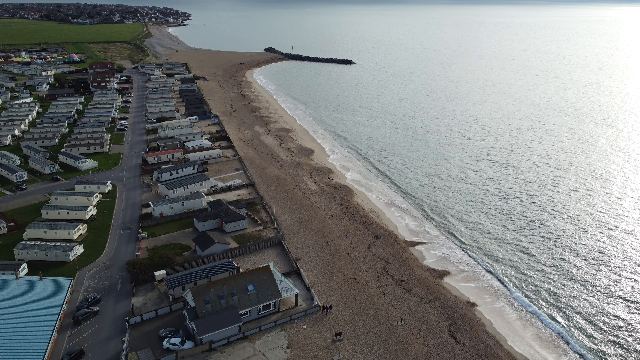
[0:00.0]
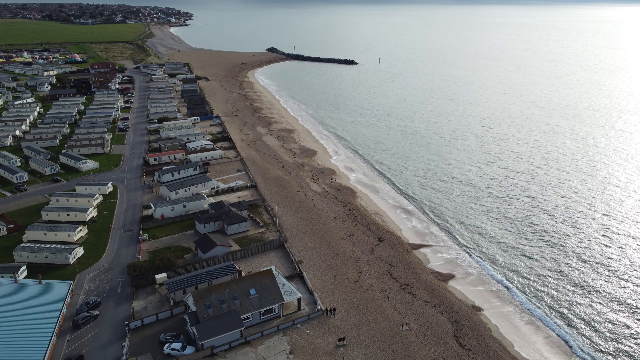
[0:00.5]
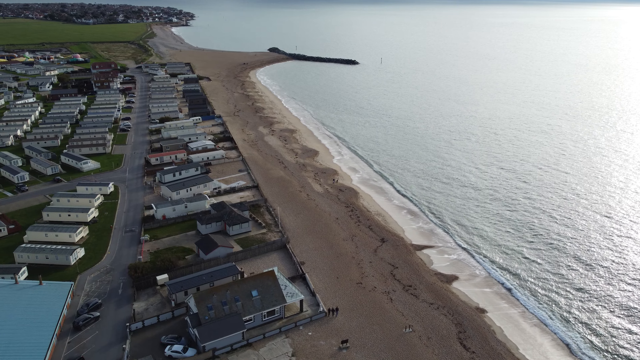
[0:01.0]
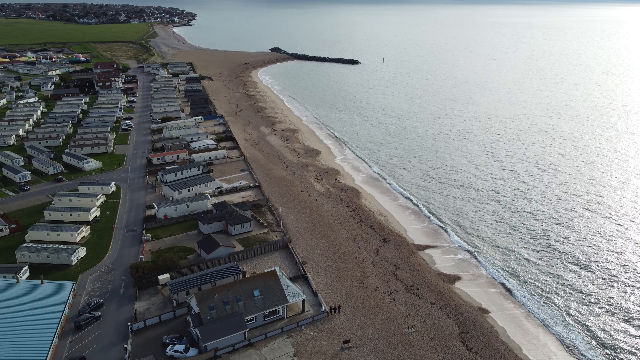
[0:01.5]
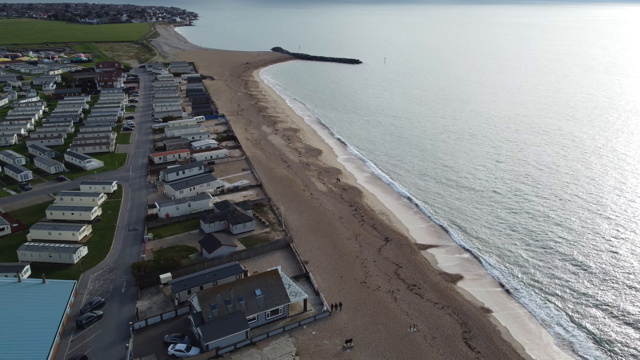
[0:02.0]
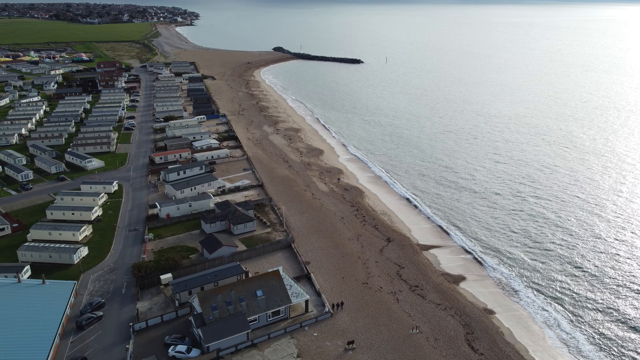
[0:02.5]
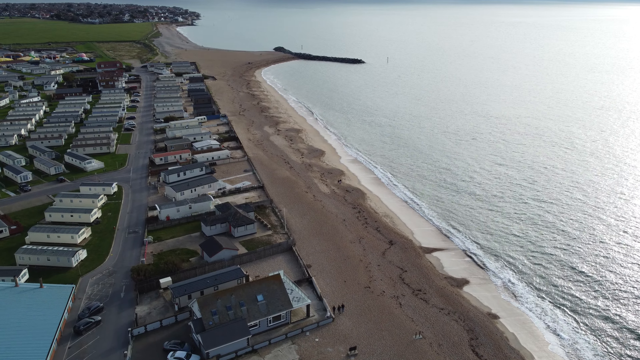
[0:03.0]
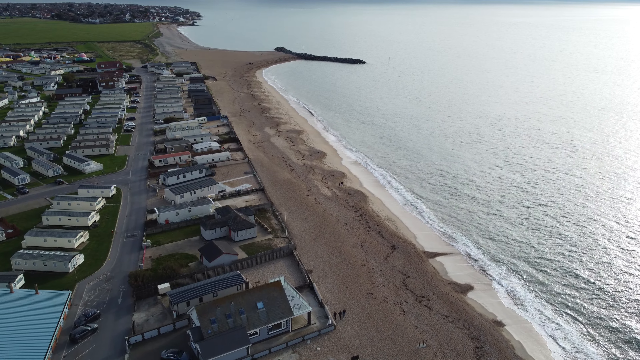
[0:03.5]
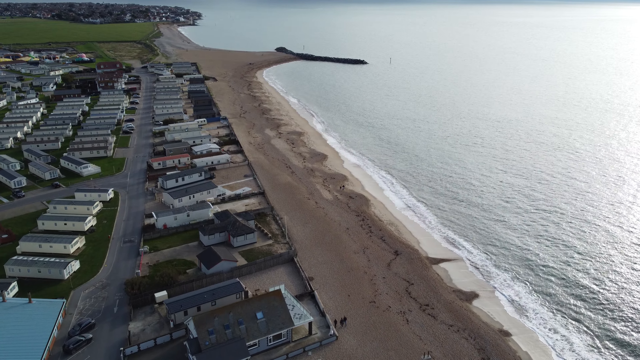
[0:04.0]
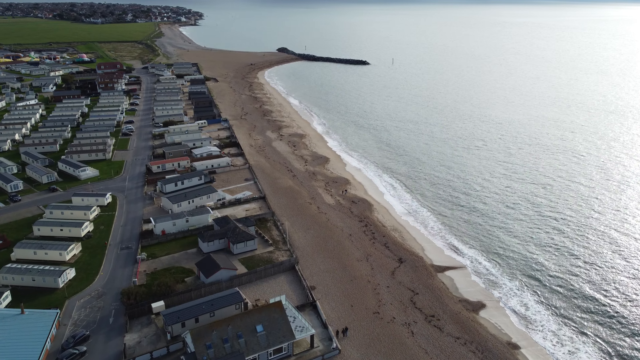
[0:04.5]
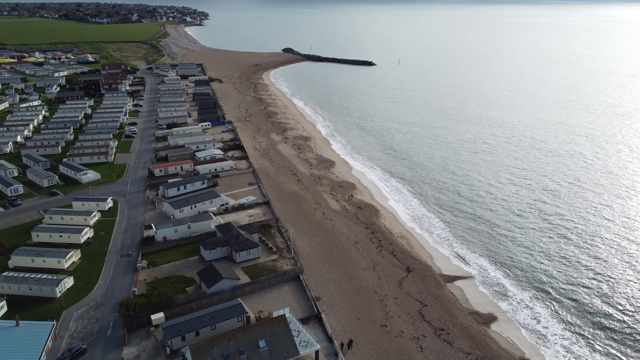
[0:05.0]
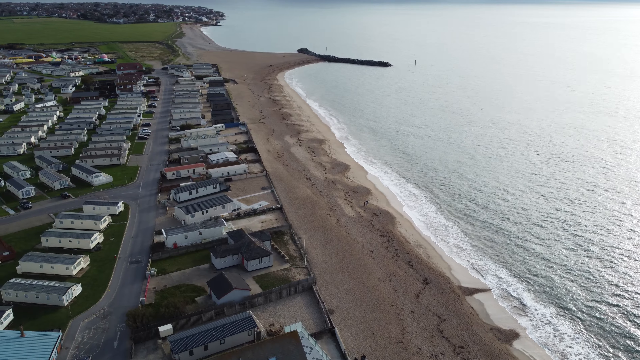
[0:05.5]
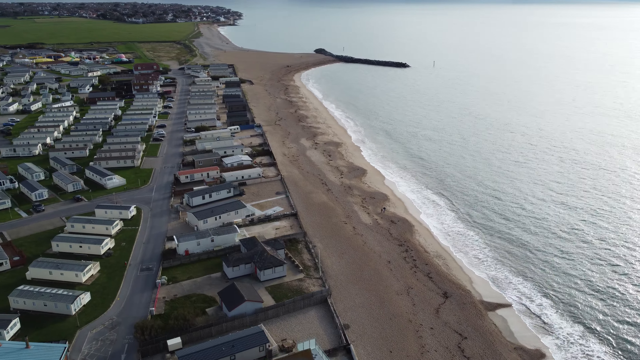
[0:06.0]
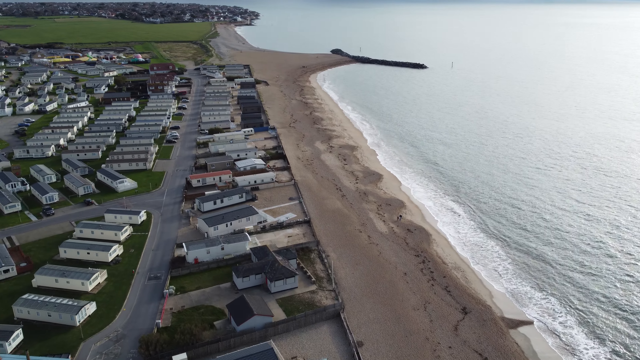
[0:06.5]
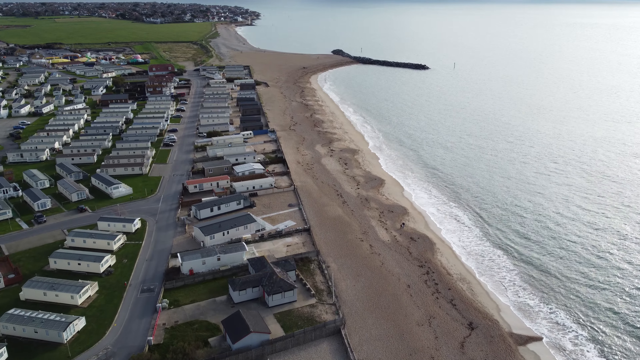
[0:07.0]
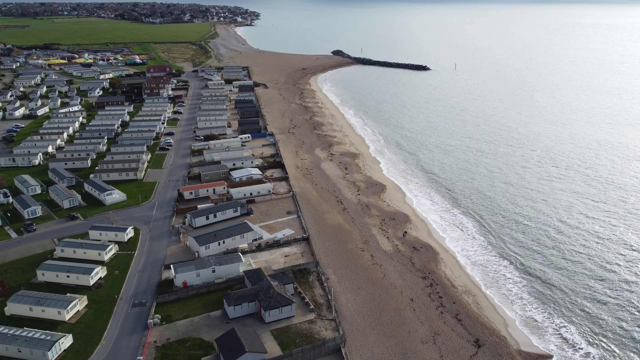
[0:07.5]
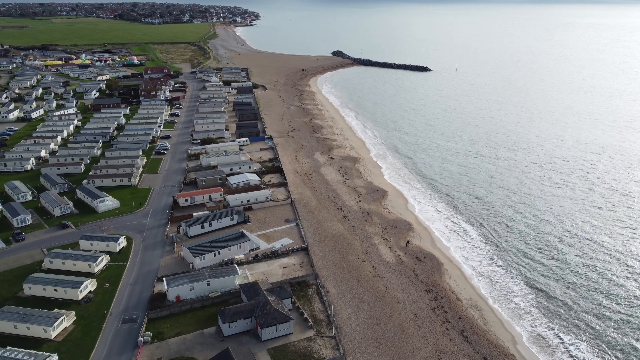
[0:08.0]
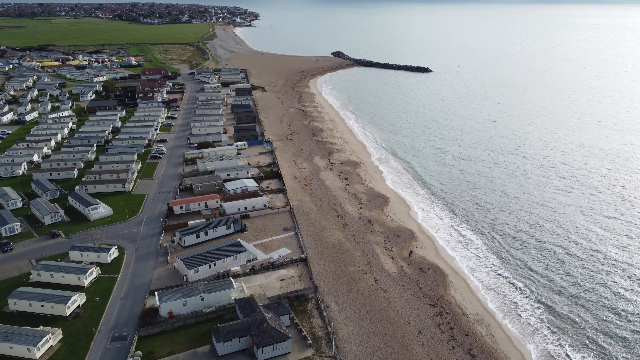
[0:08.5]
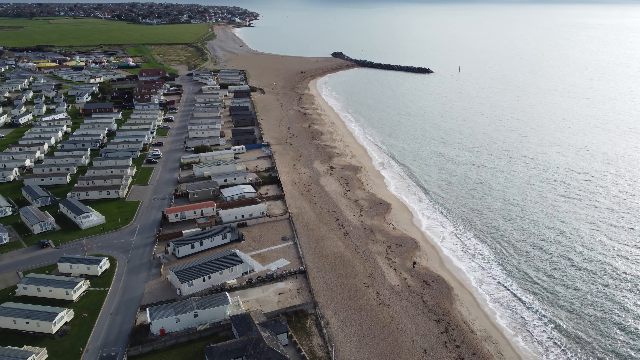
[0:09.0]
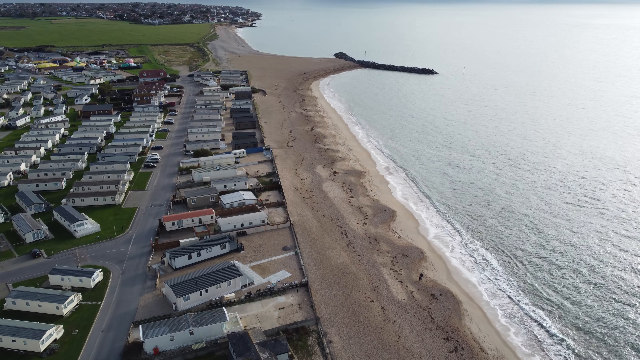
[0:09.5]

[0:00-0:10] What appears to be drone-type footage, taken from high above, shows a coastal scene. A sandy beach stretches along the coastline, with the sea lapping up onto the beach. Large structures that could be houses are visible, though judging by their type they could be holiday park accommodation. The scene looks like a typical UK beach town where people may go on holiday. The drone follows the beach down, and greenery comes into view.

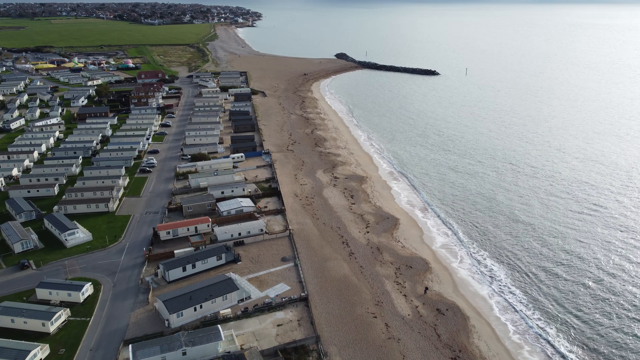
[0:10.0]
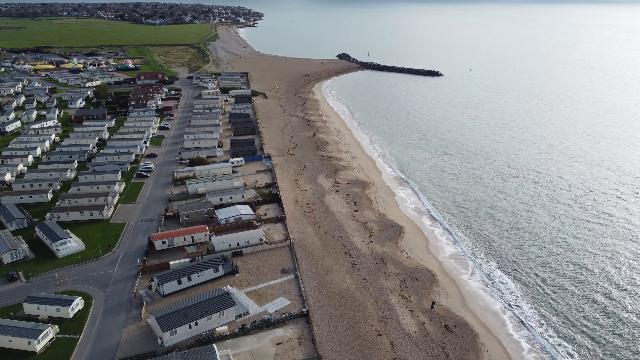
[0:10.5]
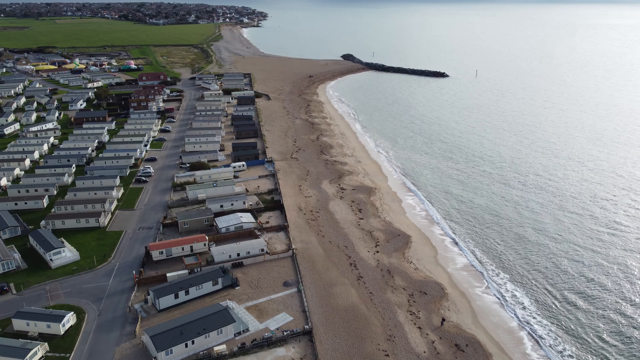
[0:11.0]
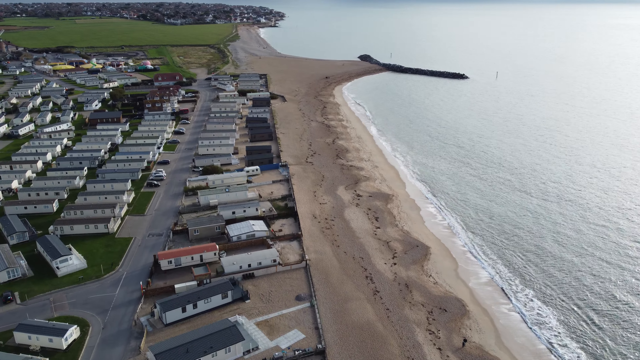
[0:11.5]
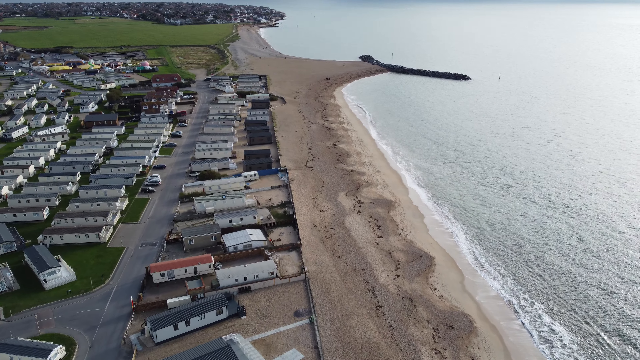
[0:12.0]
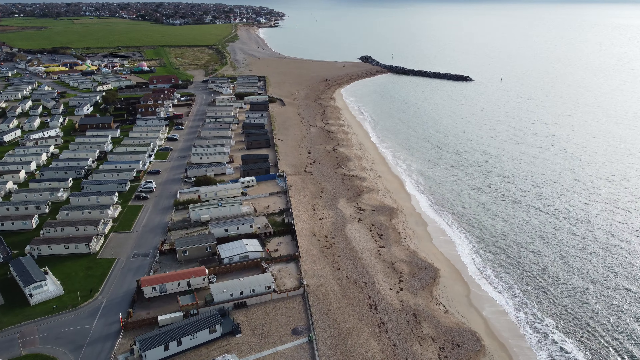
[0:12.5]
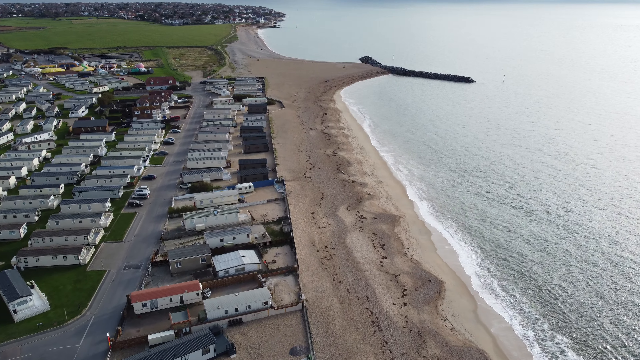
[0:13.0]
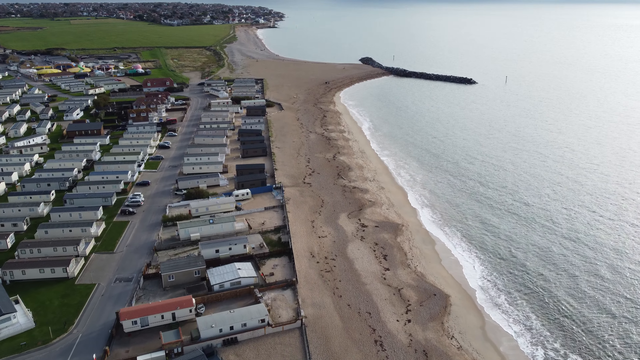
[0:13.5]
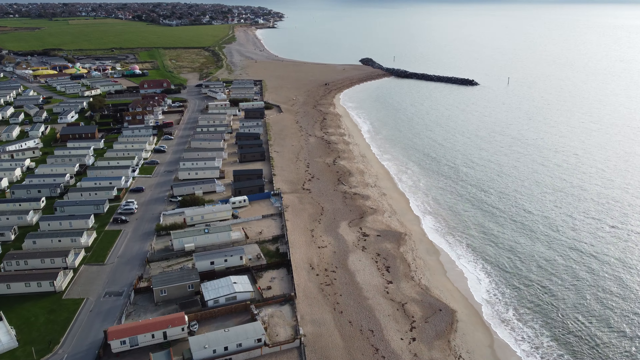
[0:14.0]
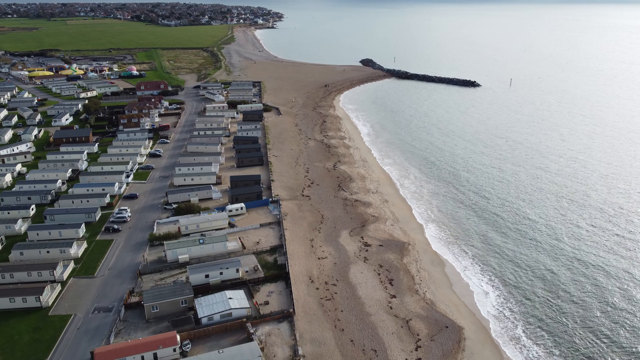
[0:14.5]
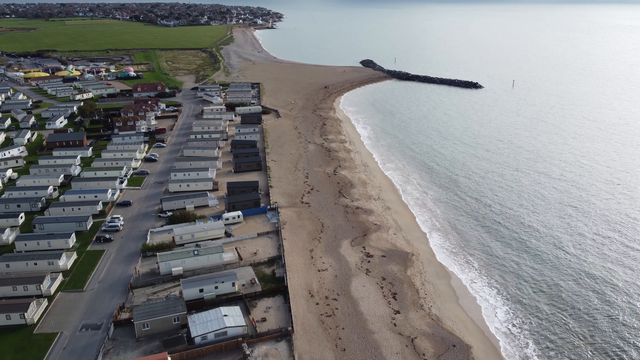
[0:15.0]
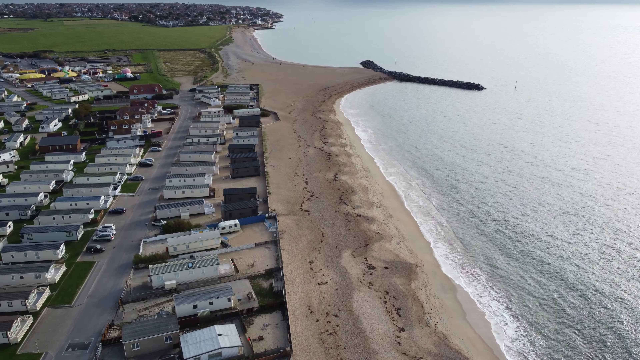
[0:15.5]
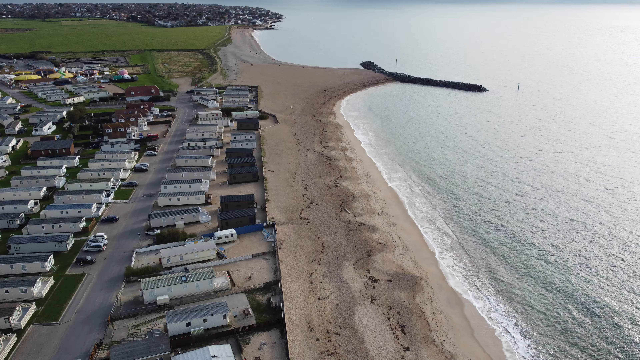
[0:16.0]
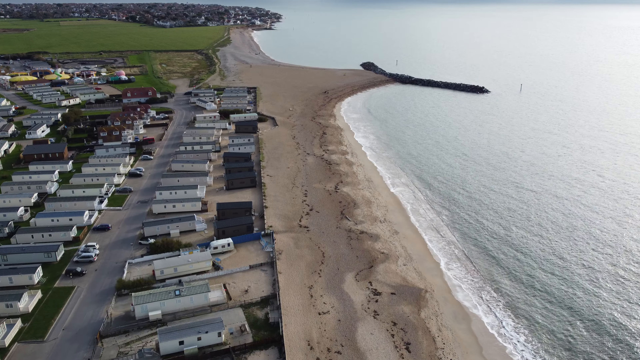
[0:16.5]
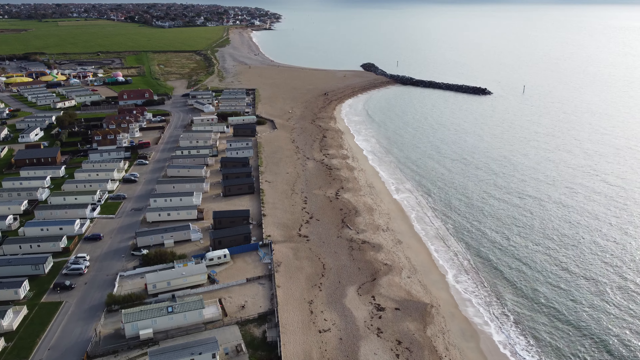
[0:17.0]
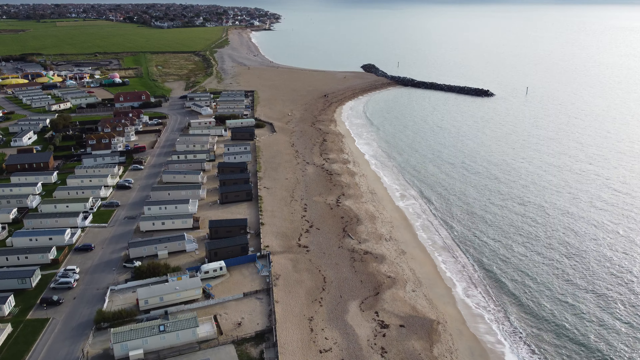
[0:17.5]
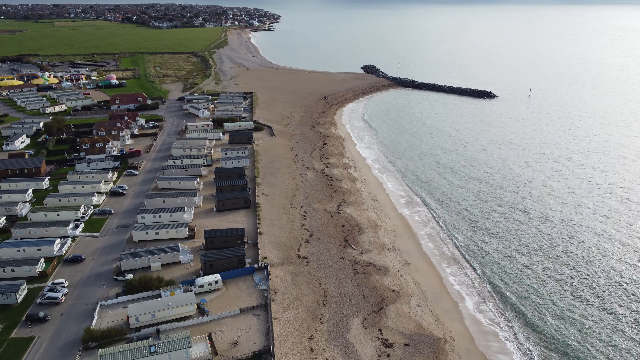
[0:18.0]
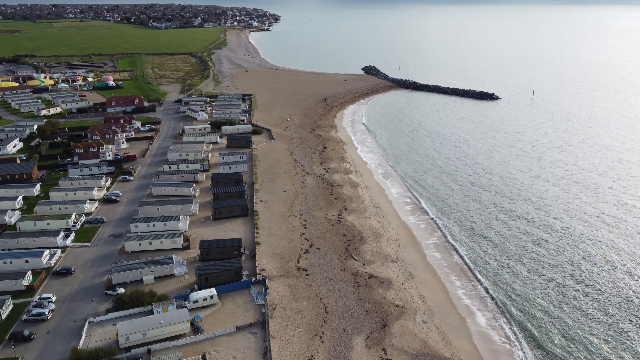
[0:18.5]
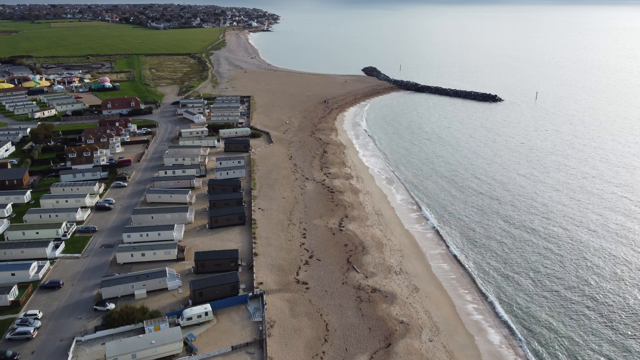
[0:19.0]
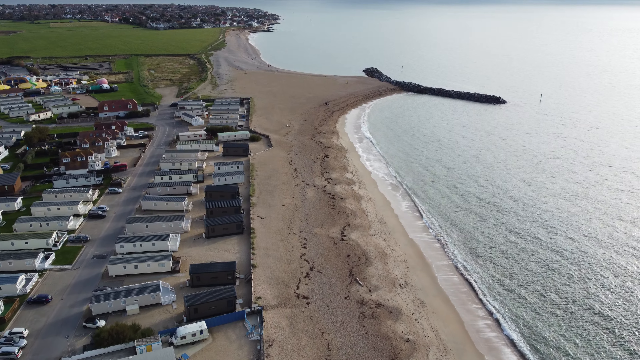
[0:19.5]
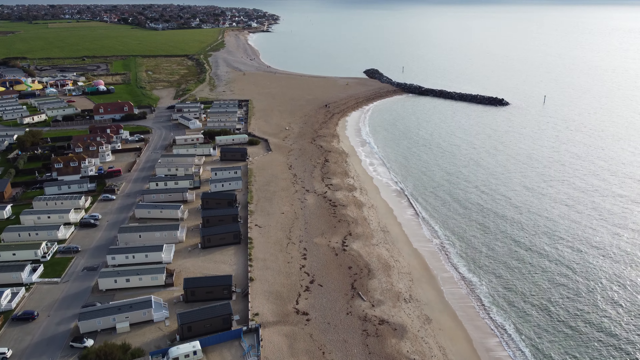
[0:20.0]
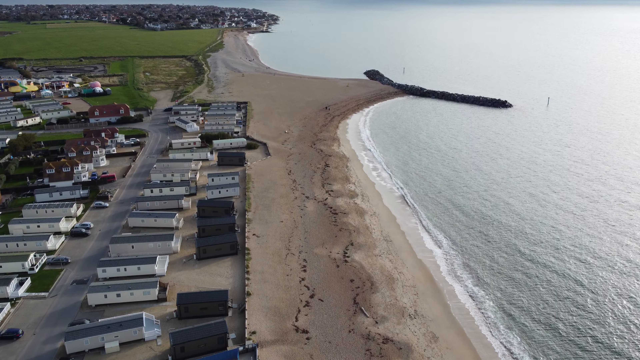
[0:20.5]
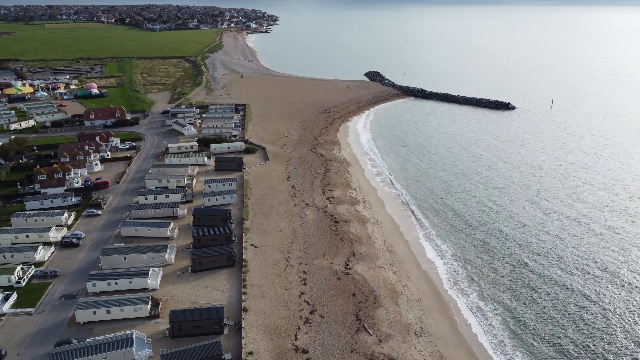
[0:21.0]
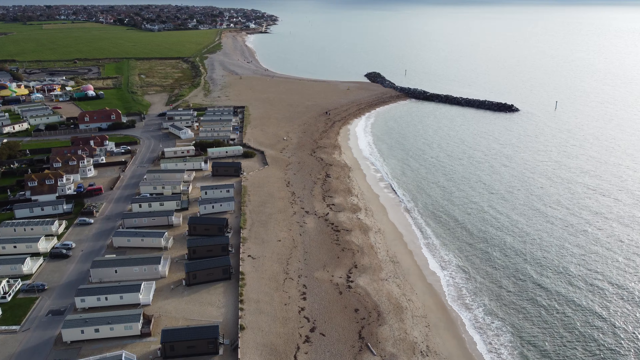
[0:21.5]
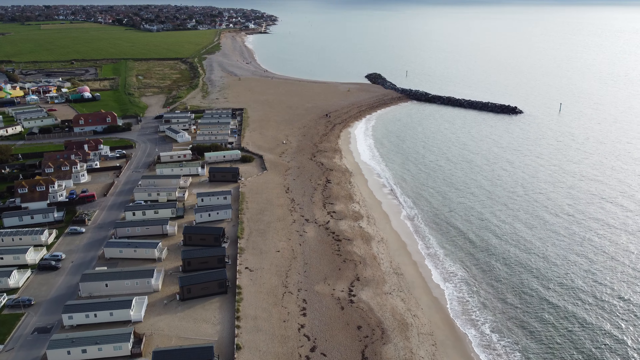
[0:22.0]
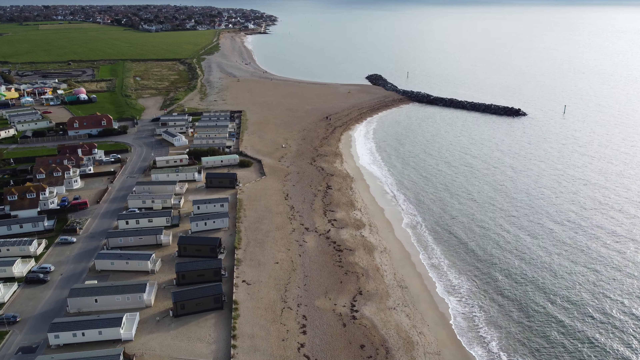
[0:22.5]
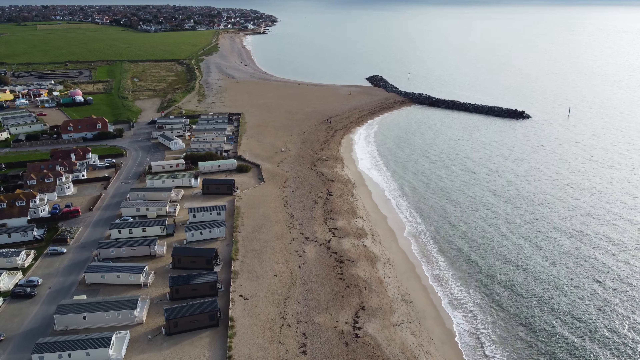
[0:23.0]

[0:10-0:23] The drone has perhaps dropped slightly lower. Though difficult to spot, some groups of people are walking on the beach. The waves lapping up onto the shore are seen more closely, and it appears to be slightly overcast. More of the buildings are visible, and they appear to be some sort of caravan park, typical of British coastal areas. The caravans appear to be very large, and all are rectangular with dark grey roofs. The drone continues to hover across the beach as it moves further up the coast toward what may be some sort of pier structure.